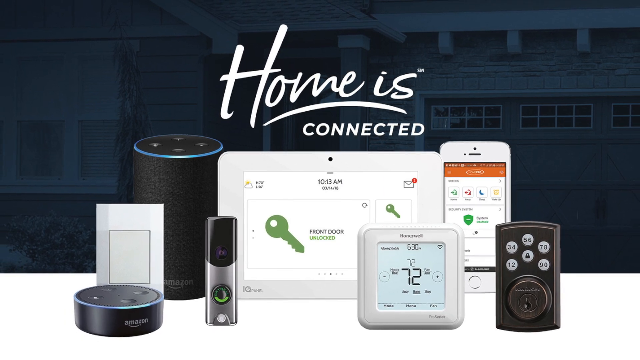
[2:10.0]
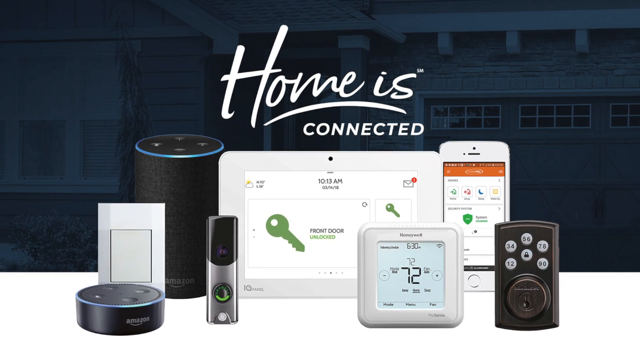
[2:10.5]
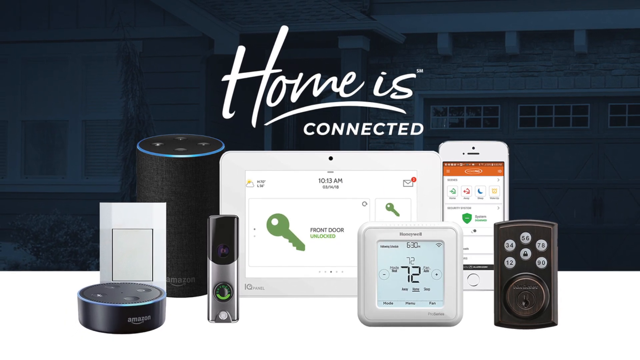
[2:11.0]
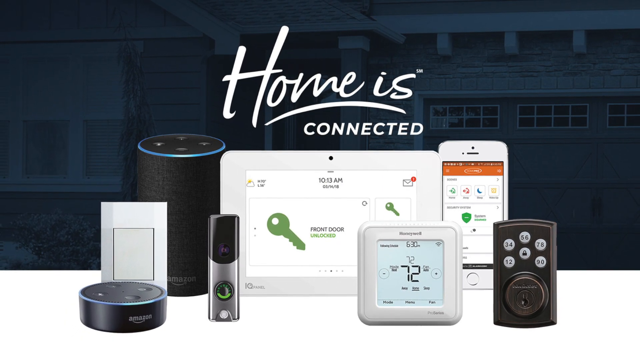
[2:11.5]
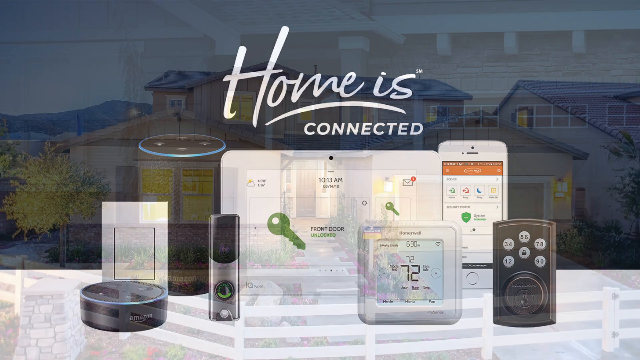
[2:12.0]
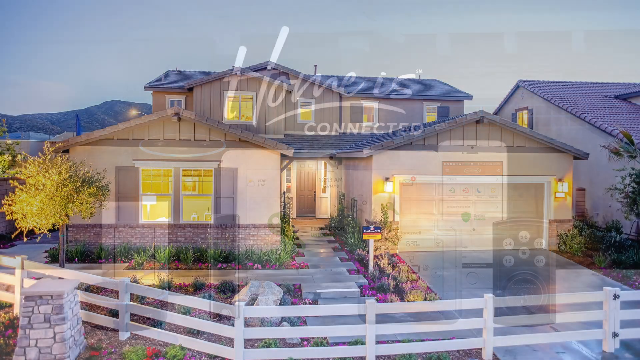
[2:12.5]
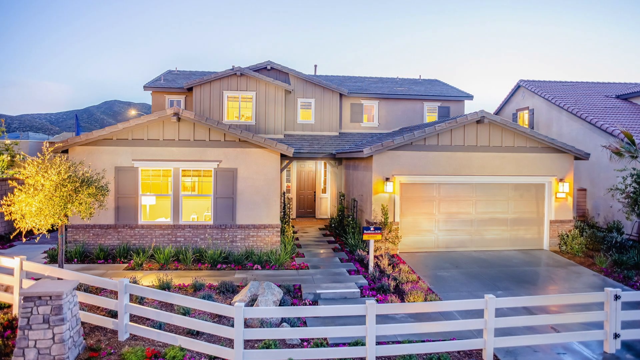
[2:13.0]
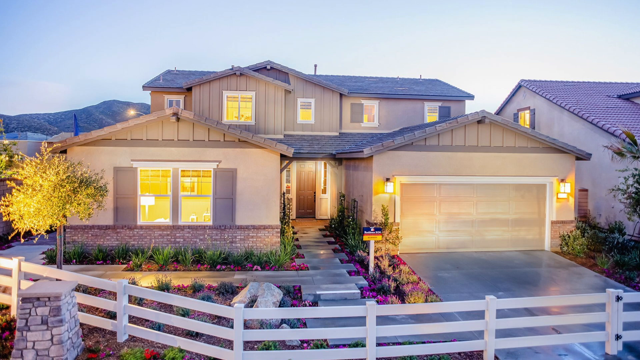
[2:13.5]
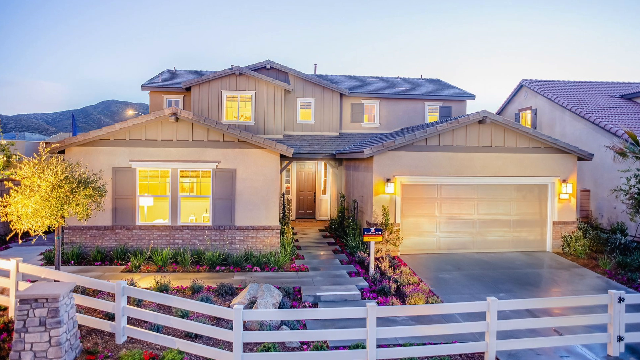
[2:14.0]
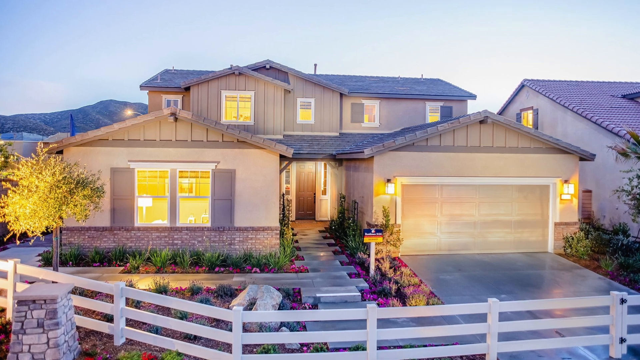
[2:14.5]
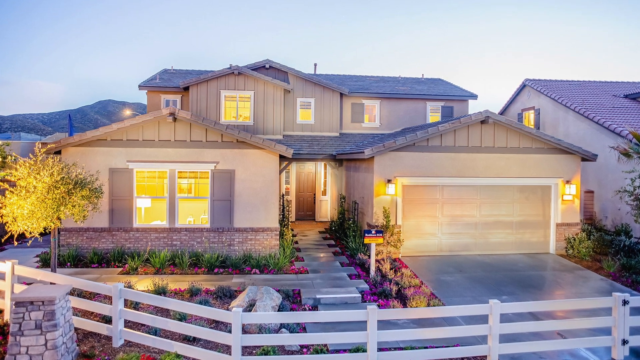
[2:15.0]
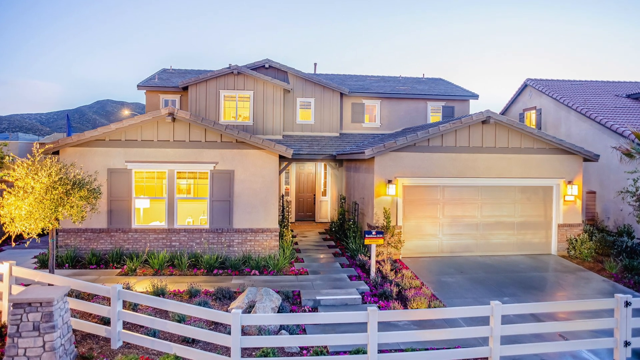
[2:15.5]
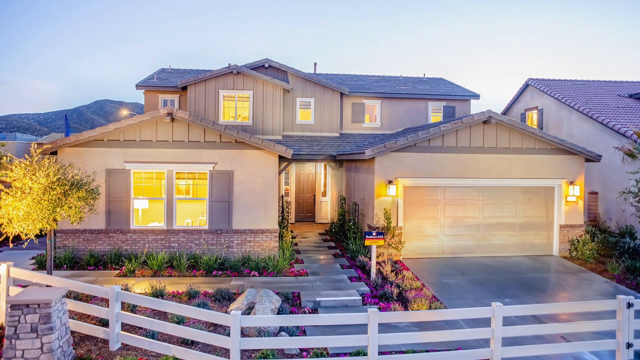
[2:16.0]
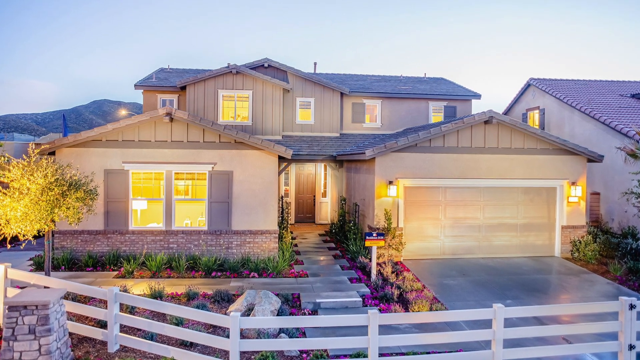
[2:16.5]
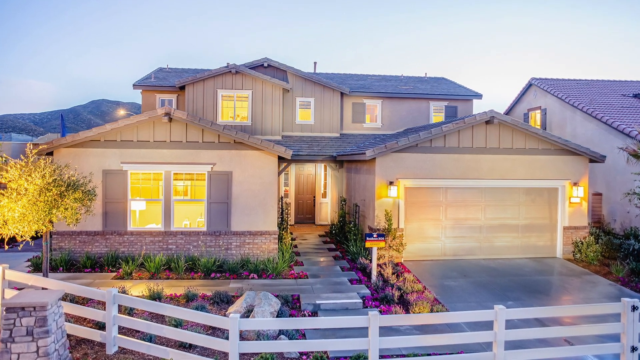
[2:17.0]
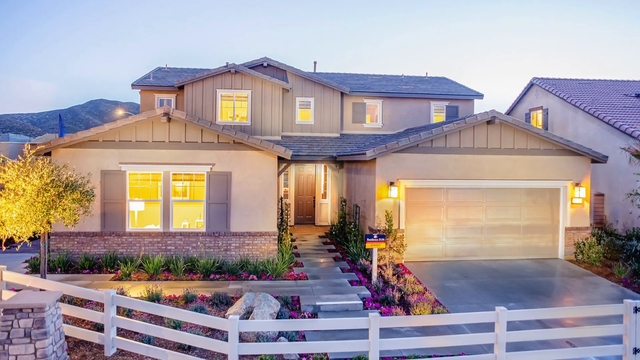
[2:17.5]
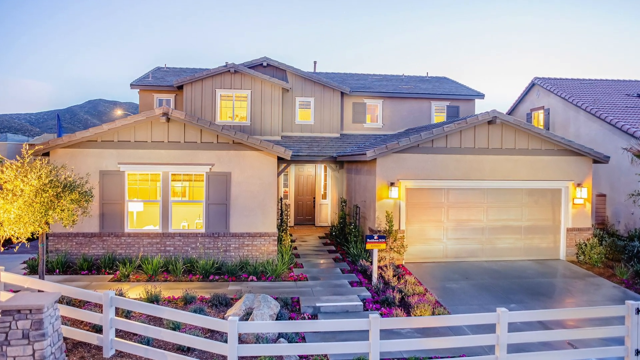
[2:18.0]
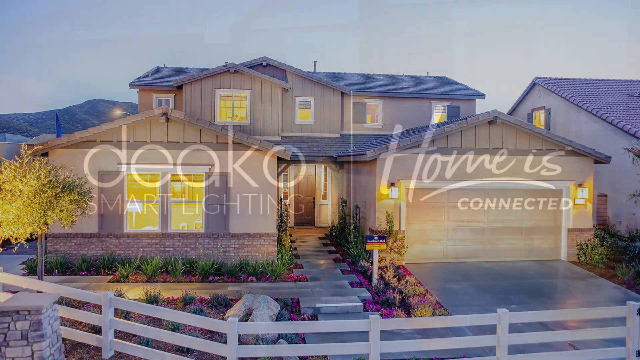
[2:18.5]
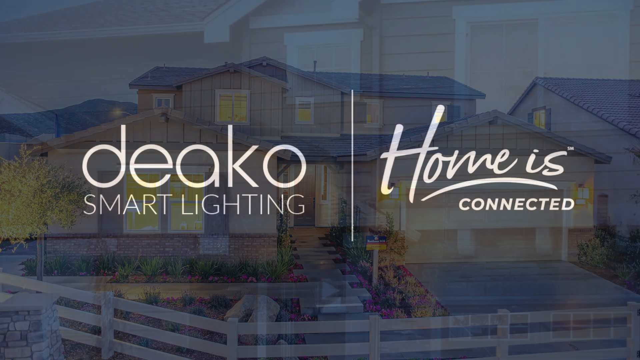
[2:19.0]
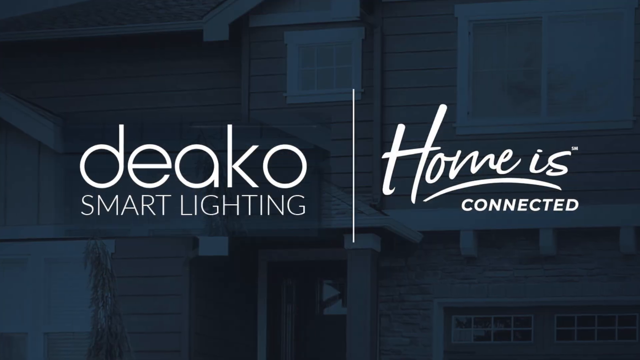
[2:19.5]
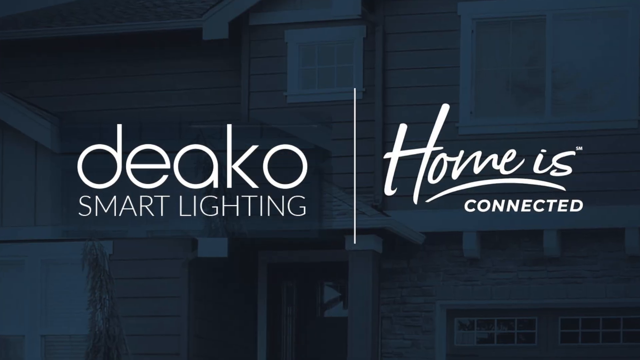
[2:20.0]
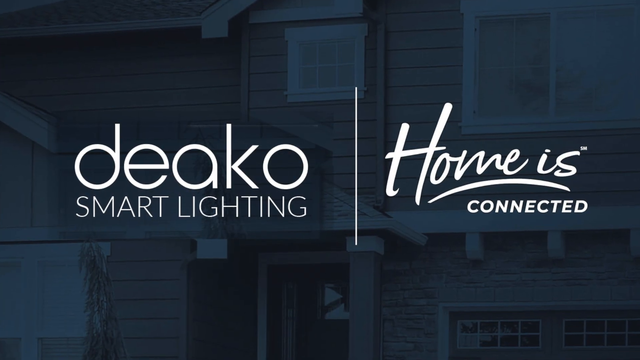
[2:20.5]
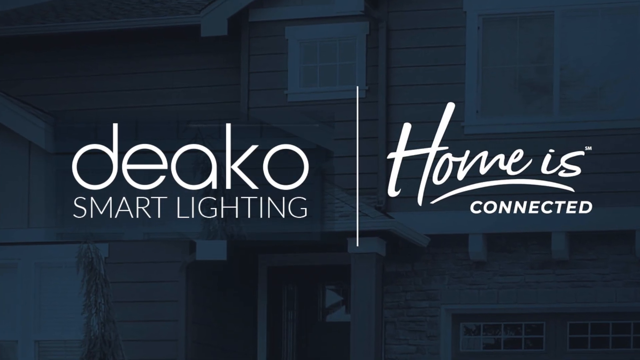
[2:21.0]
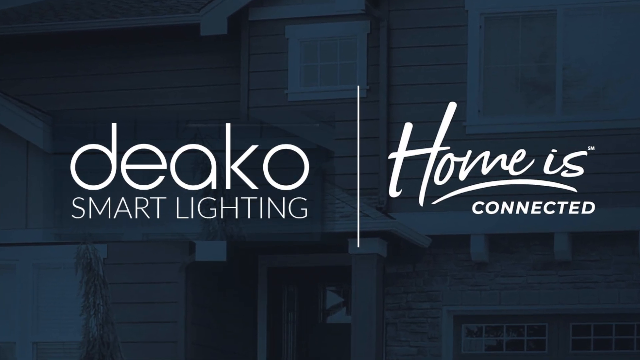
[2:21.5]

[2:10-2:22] The video is slightly wider than it is tall. In the background, a blue tint covers a very dimly lit front of a house. At the top of the foreground, white text says "Home is", underlined, and below it, also in white, "Connected". Below that is a collection of devices, apparently ones that can be controlled or used for control in a wired or wireless home. At the back left there appears to be a speaker, then a tablet, then a phone. Further forward are a control panel and an Alexa, then some sort of device that is maybe a wireless router, what looks like a thermostat, and what looks like a remote control as the last one.